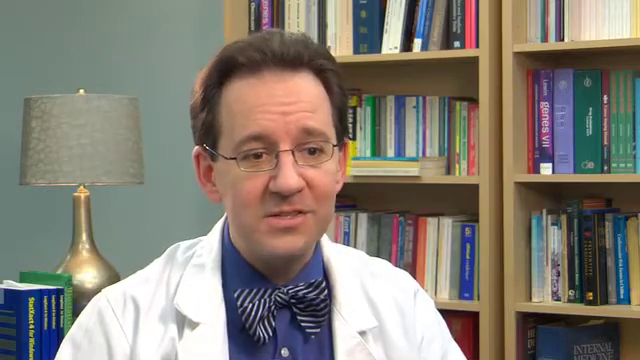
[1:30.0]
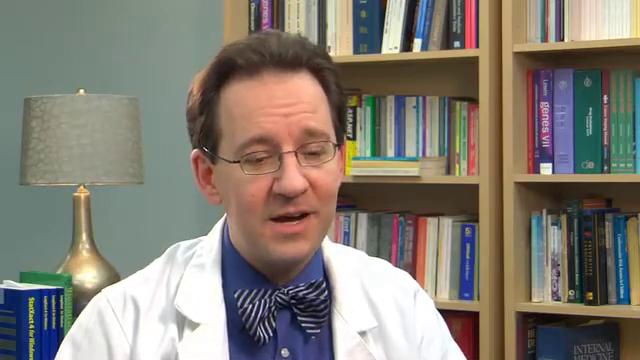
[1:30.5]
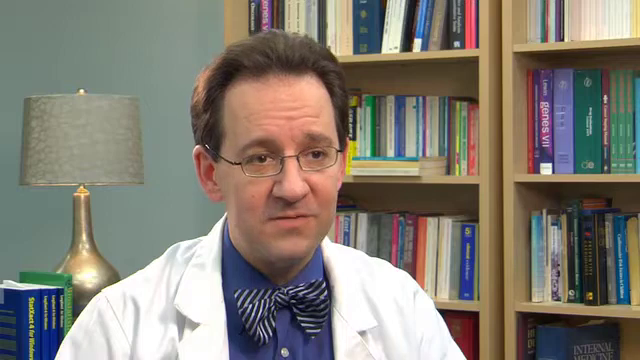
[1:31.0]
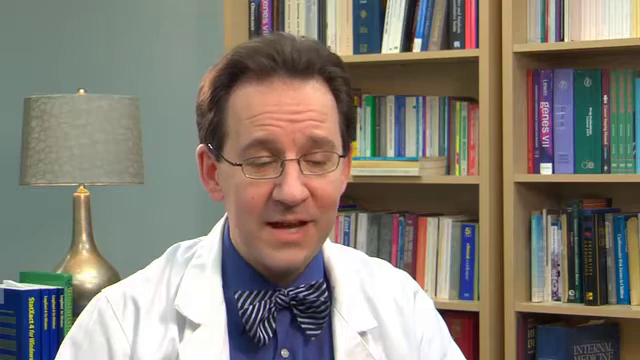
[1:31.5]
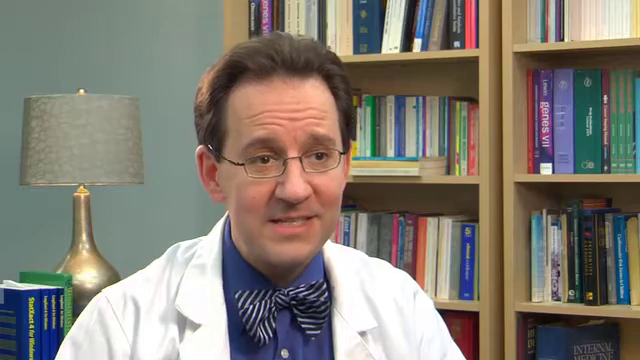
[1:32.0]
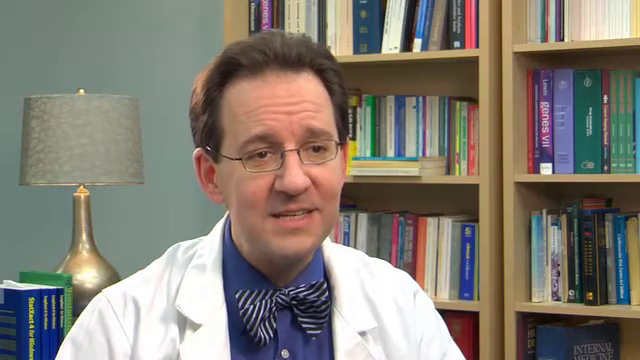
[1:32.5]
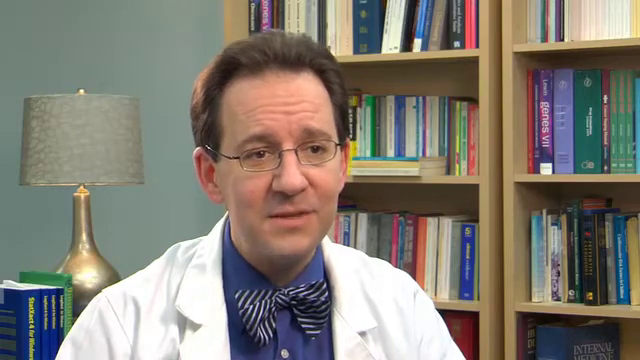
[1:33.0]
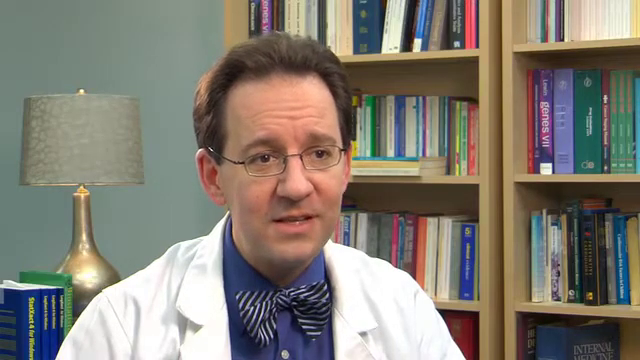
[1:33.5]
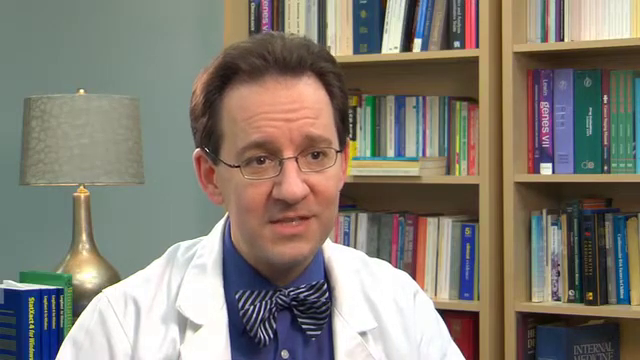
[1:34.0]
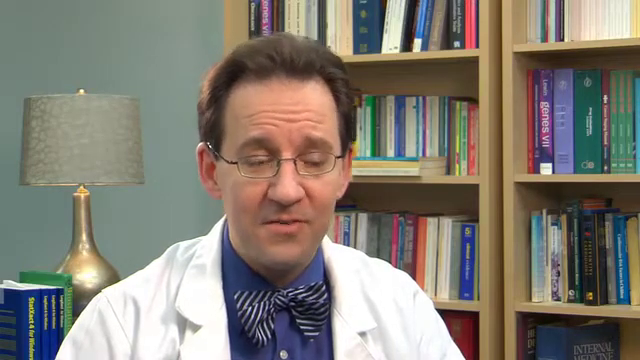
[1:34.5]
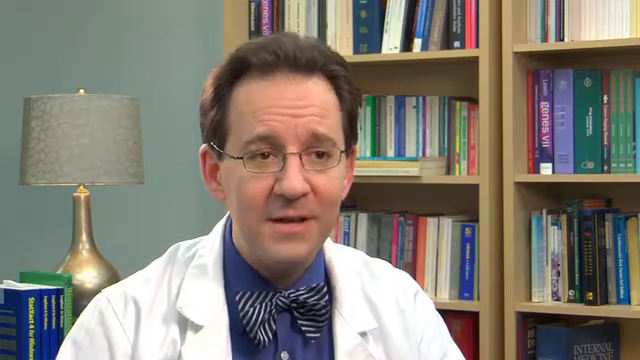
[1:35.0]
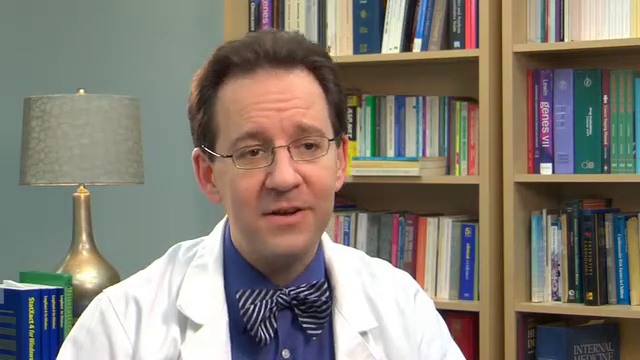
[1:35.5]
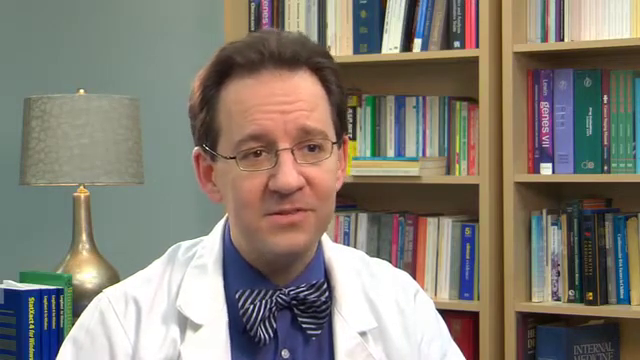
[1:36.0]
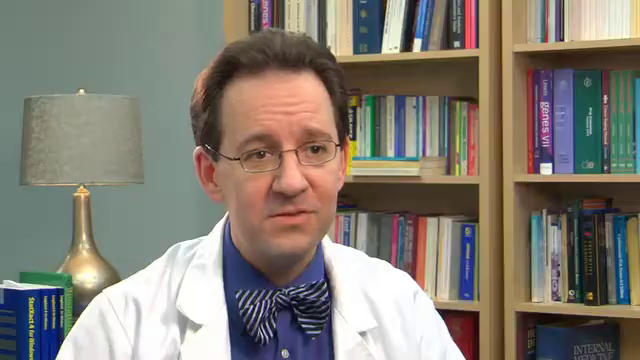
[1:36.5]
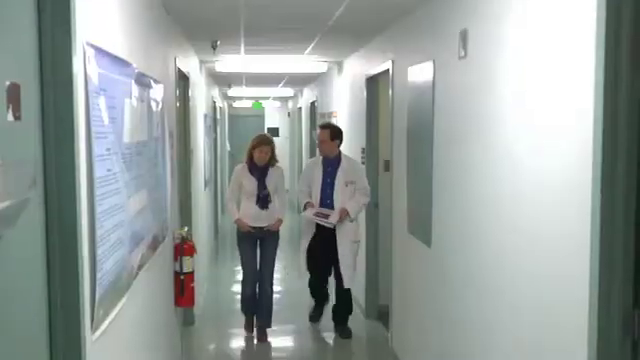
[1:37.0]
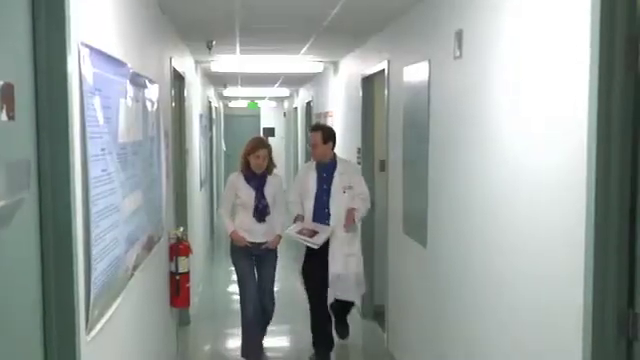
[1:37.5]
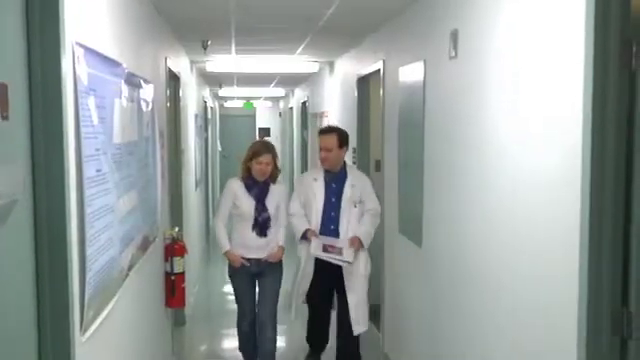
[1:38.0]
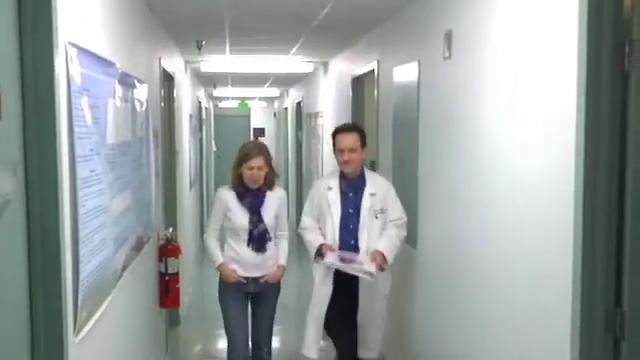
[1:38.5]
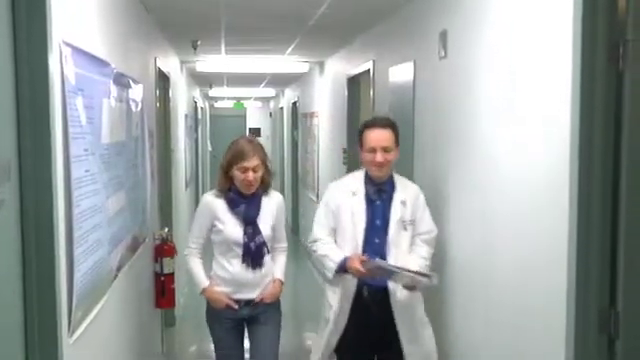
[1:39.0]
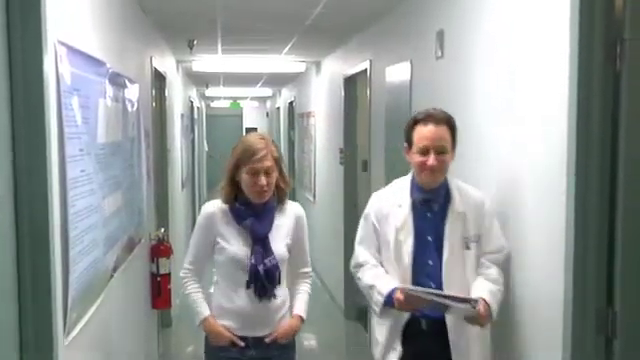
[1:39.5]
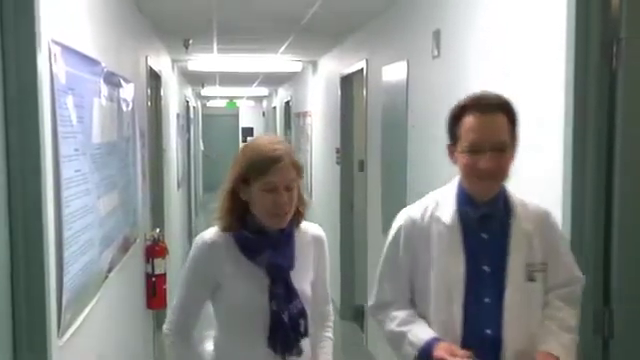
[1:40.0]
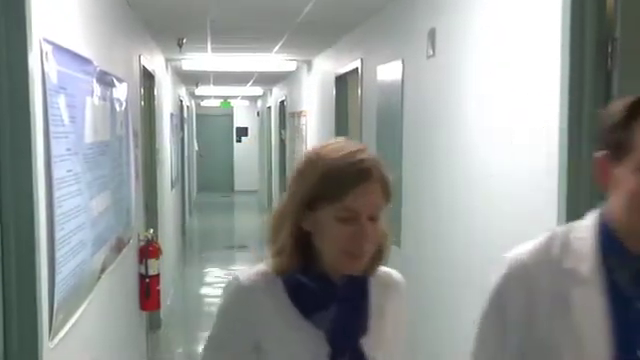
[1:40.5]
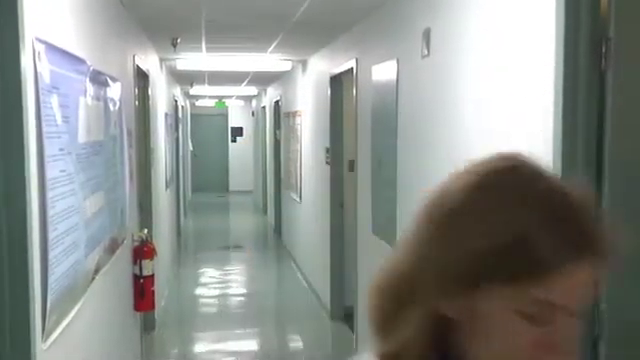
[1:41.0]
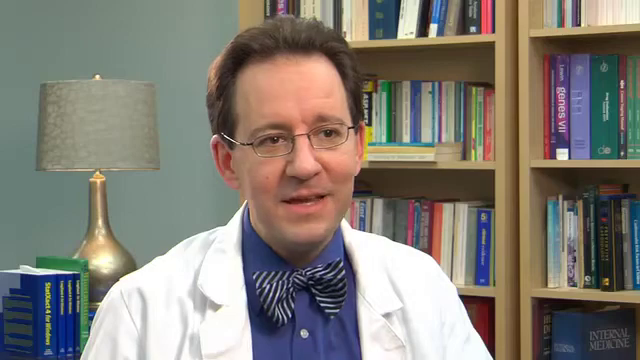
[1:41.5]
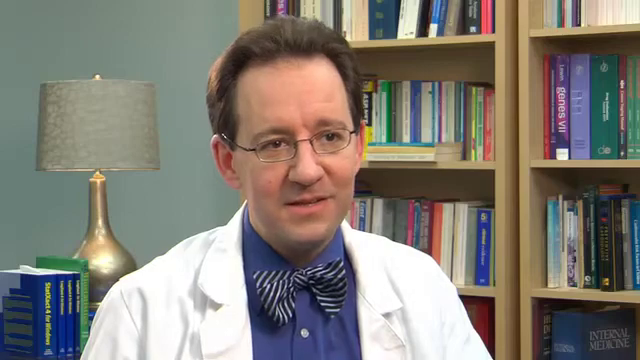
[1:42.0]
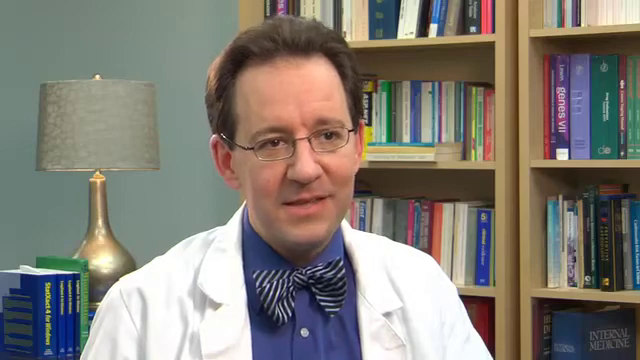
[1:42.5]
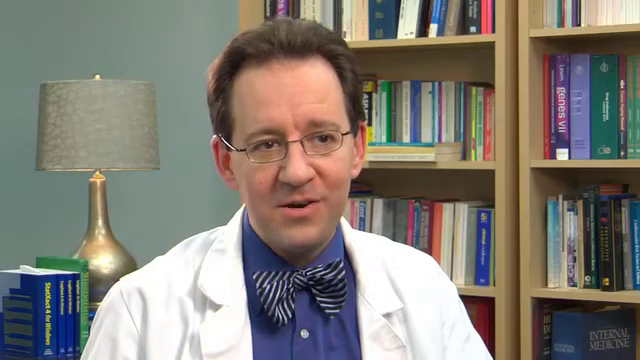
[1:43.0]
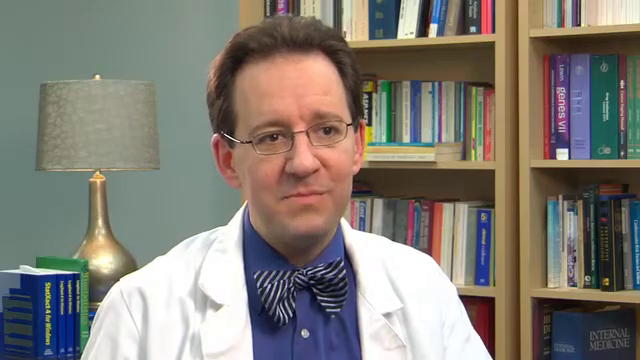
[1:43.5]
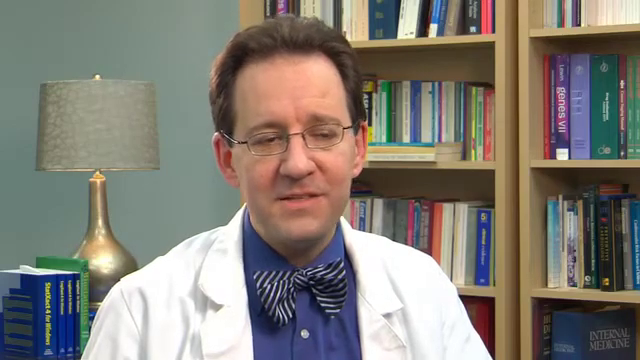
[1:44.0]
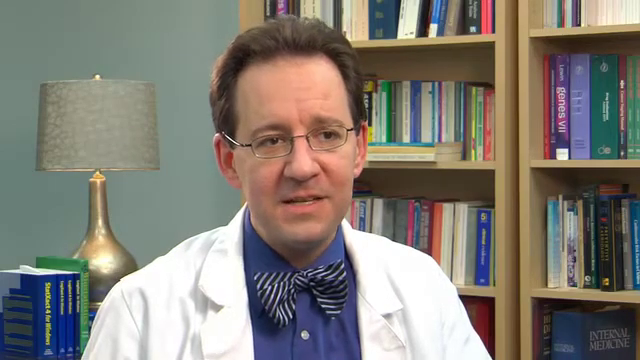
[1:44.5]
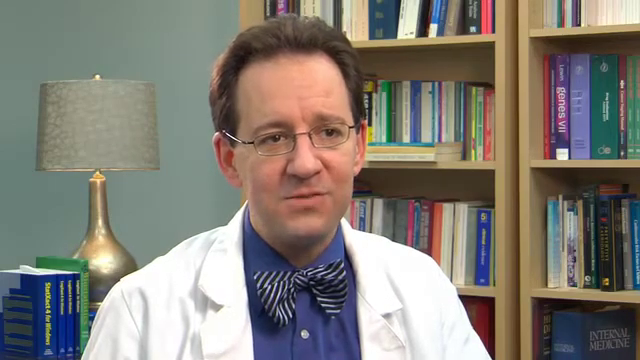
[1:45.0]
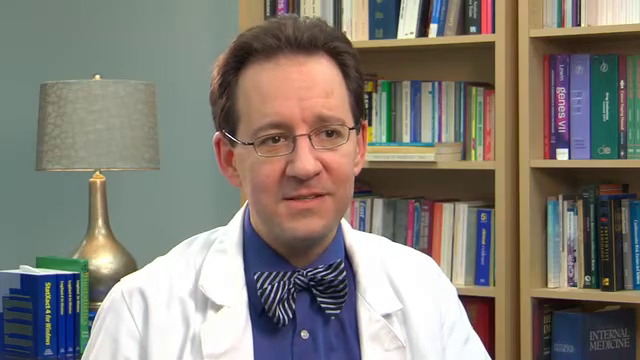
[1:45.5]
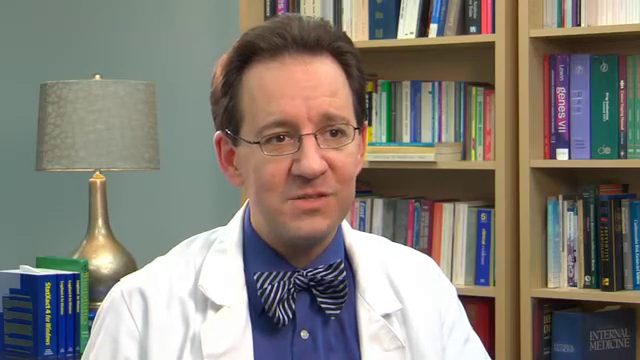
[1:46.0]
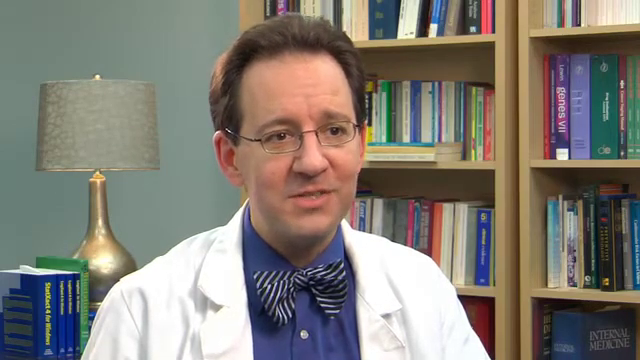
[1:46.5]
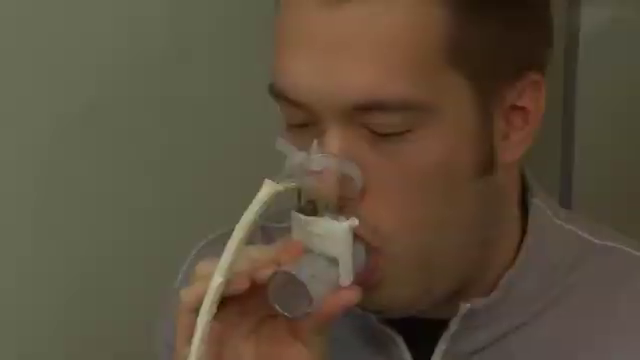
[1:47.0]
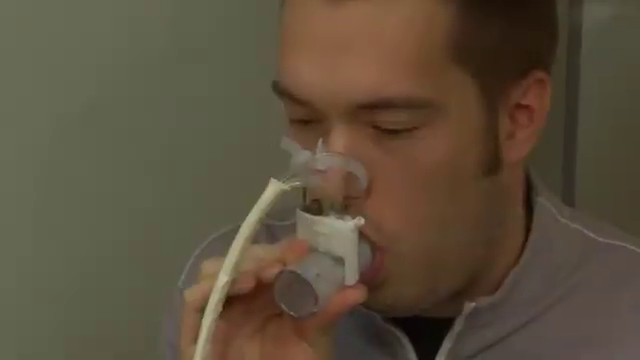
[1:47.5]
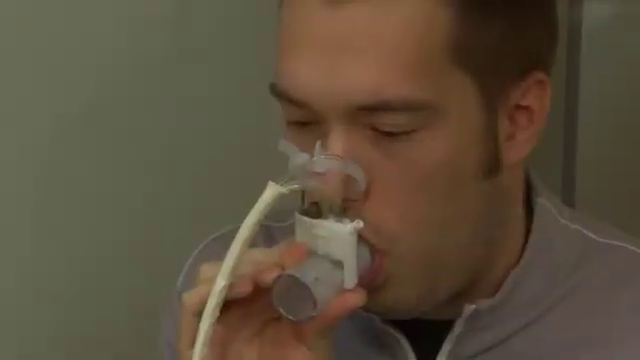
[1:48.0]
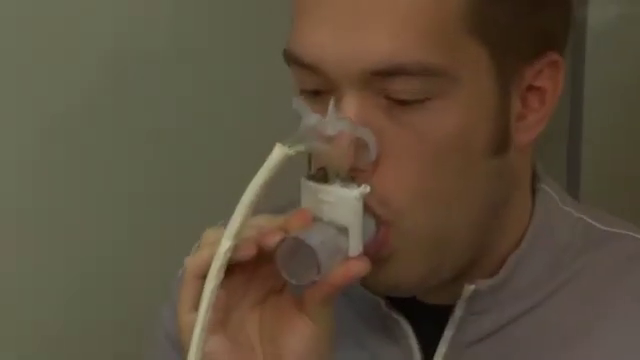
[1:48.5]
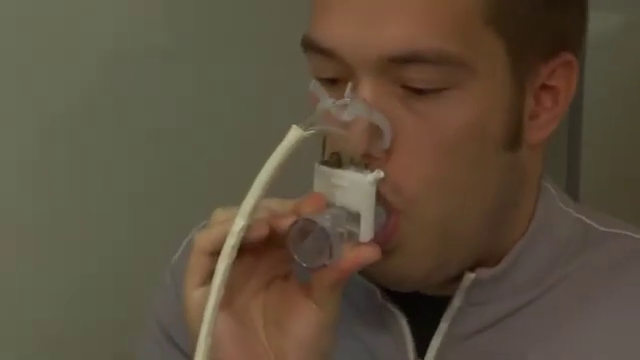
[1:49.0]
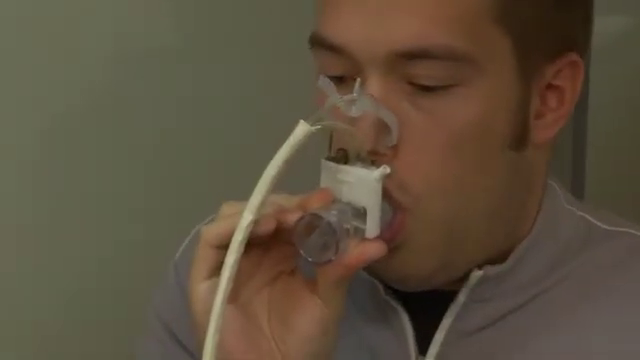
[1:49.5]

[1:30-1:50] The doctor is still being interviewed. He wrinkles his forehead as he speaks, still talking to whoever is interviewing him, with a sincere look on his face, and moves his head slightly. Next, he walks down a hallway with a colleague, a woman; he is on the right side of the frame and she is on the left. He wears a long-sleeve blue collared button-down shirt and a white lab coat. His colleague is dressed similarly to him; she has brown hair, a blue scarf tied around her neck and a white blouse. The doctor holds a three-ring binder in his hands as he walks down the hallway, talking to his colleague and smiling. Next, the doctor sits in his office again, still being interviewed. Finally, a man breathes into some sort of breathing apparatus; he looks like he takes a deep breath in with the apparatus in his mouth. It covers his nose, part of it is inside his mouth, and it is attached to a white rubber tube.